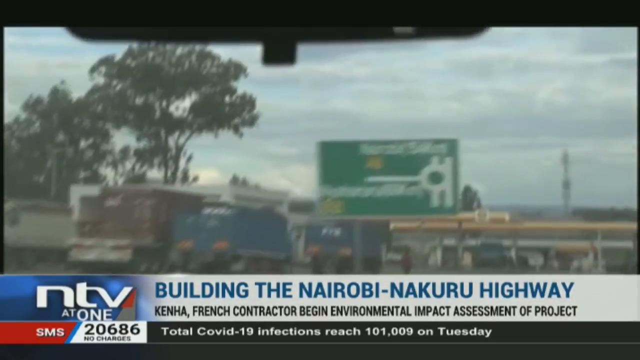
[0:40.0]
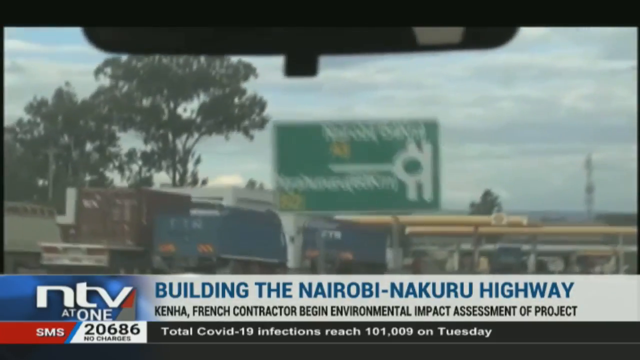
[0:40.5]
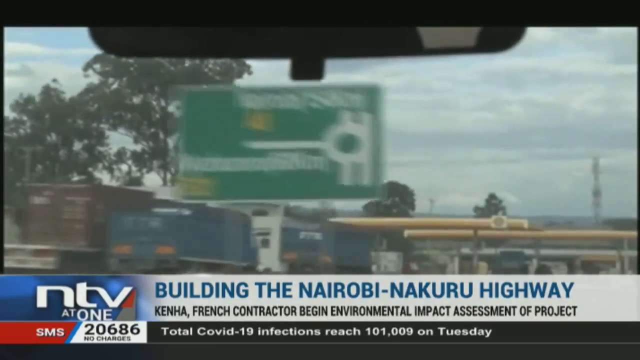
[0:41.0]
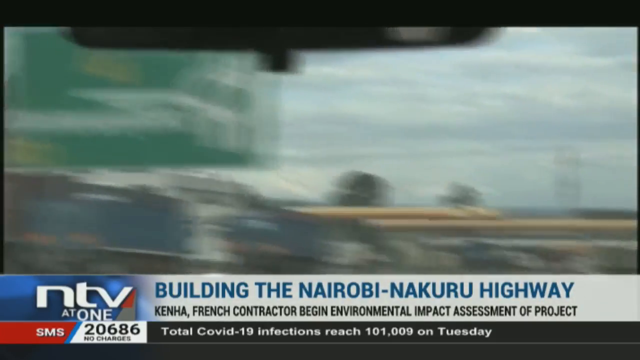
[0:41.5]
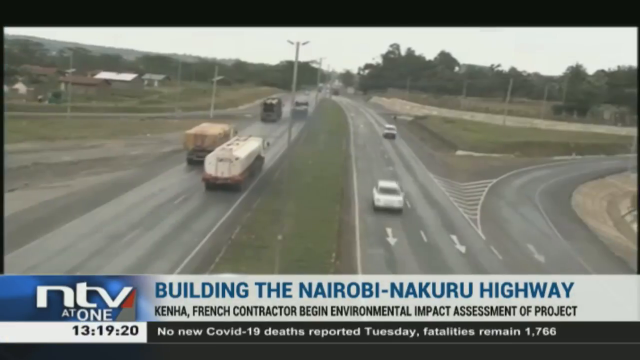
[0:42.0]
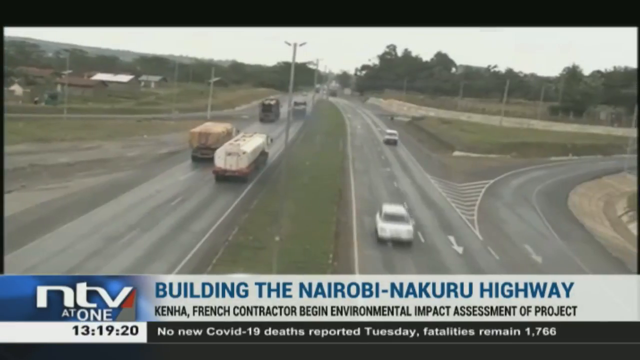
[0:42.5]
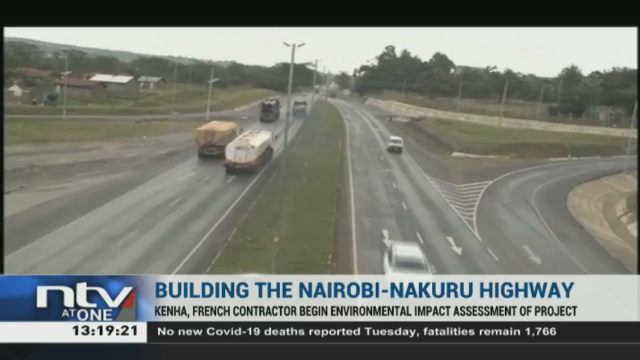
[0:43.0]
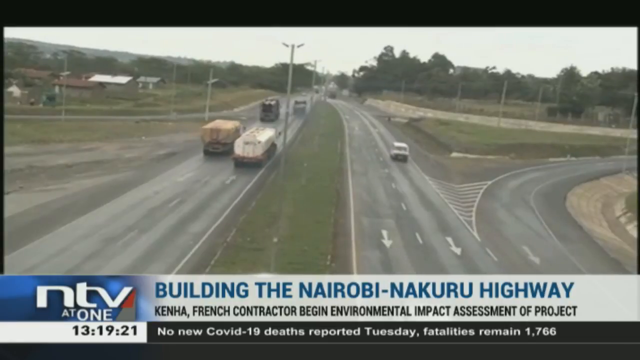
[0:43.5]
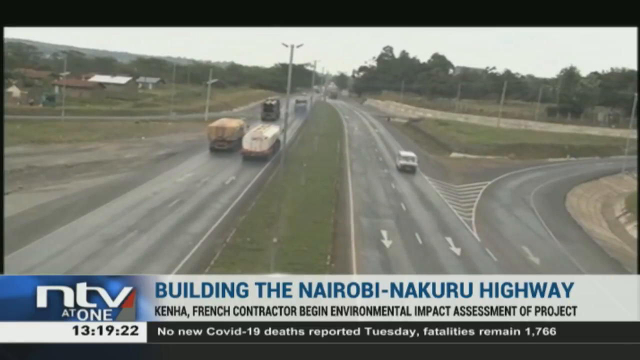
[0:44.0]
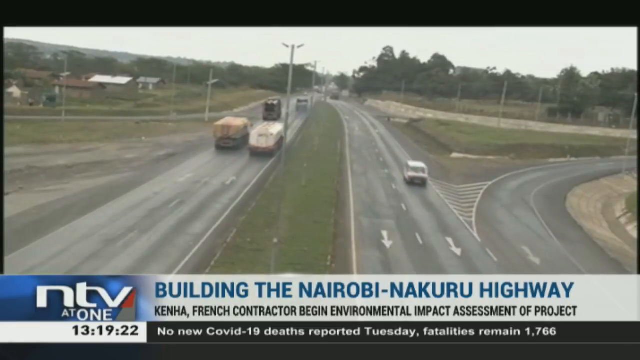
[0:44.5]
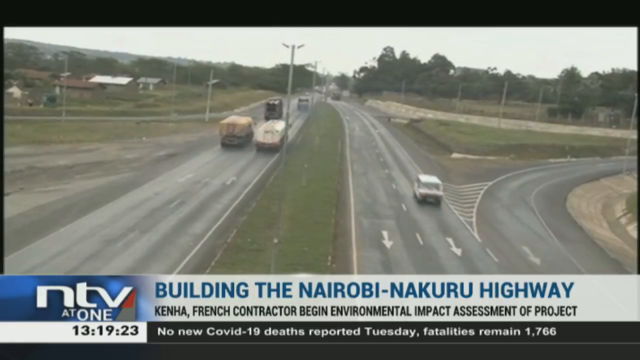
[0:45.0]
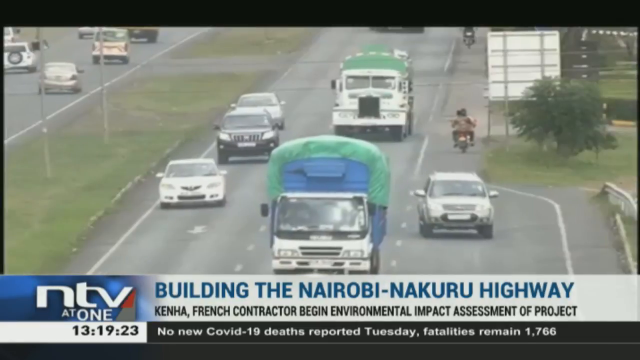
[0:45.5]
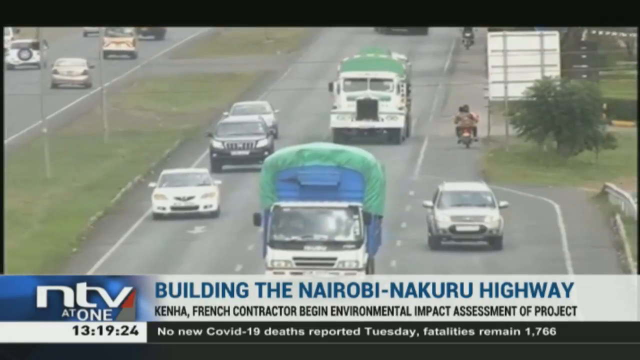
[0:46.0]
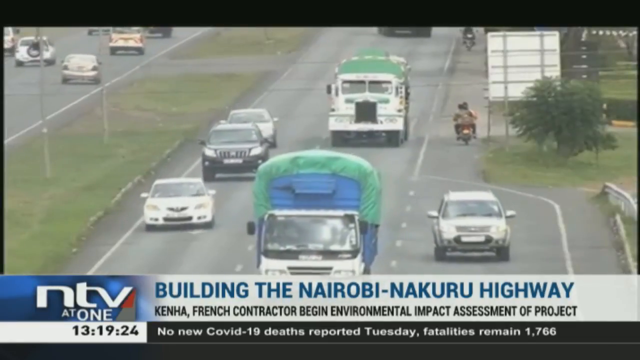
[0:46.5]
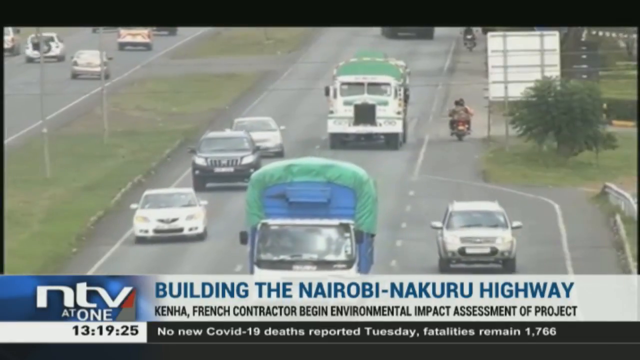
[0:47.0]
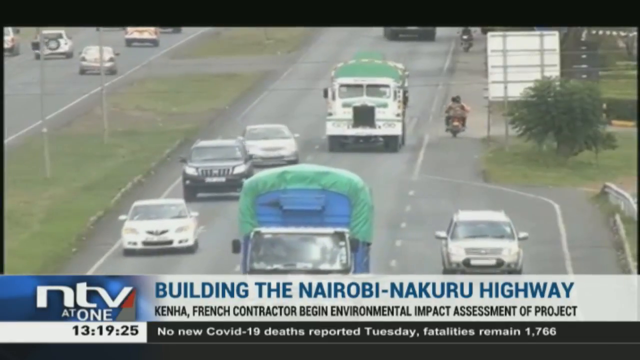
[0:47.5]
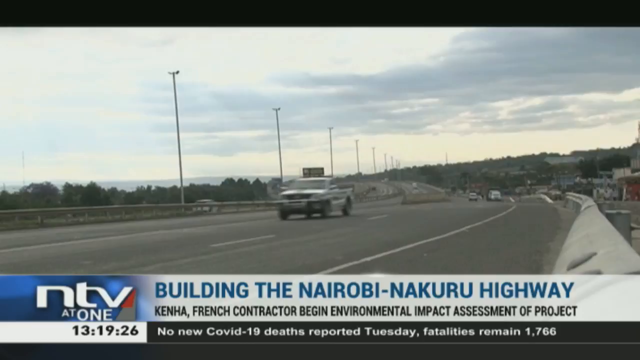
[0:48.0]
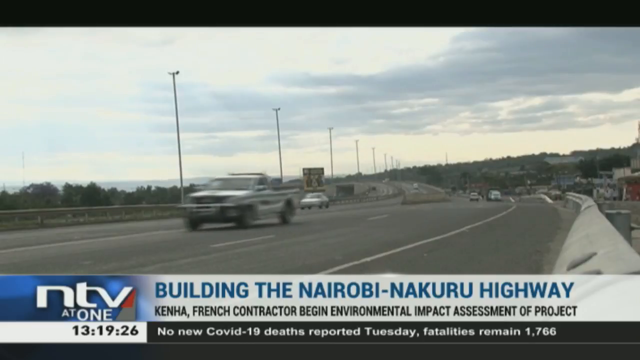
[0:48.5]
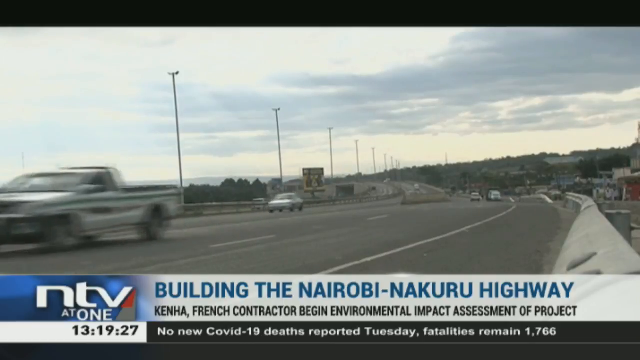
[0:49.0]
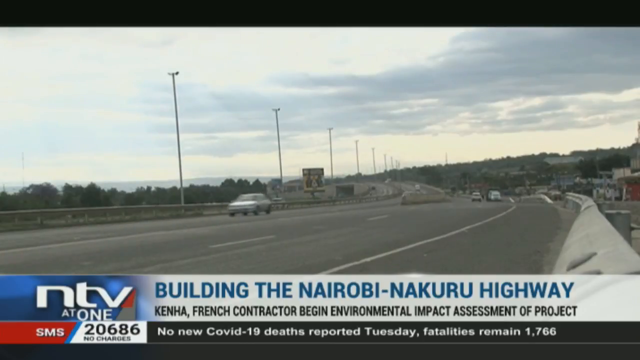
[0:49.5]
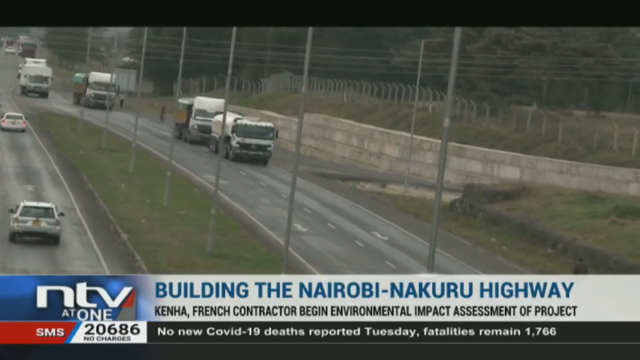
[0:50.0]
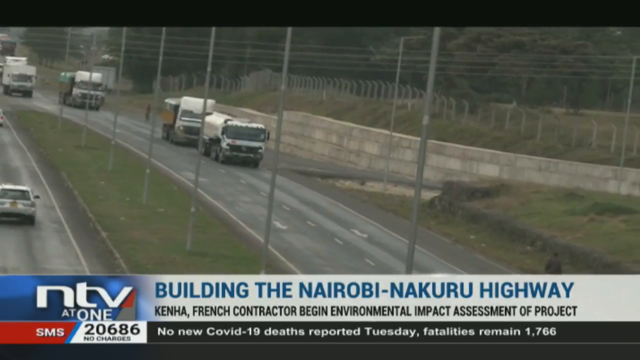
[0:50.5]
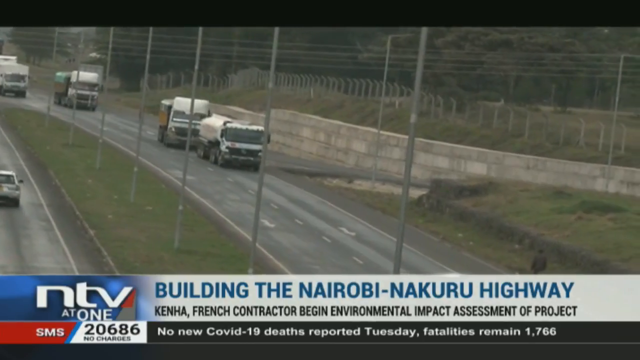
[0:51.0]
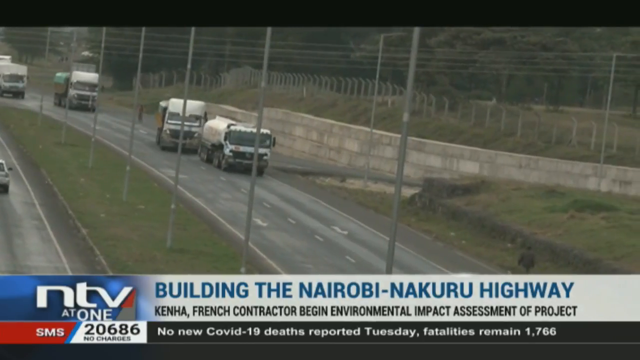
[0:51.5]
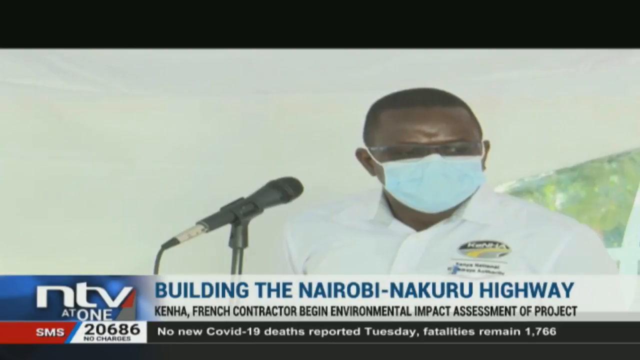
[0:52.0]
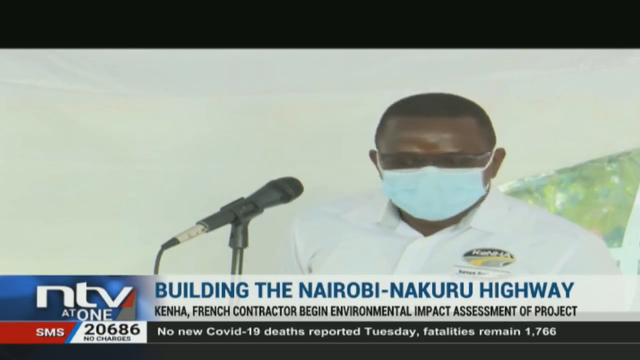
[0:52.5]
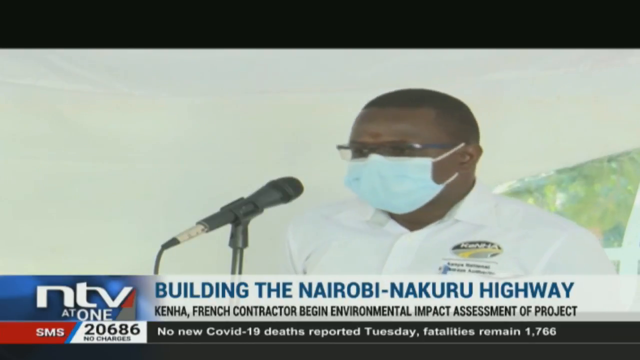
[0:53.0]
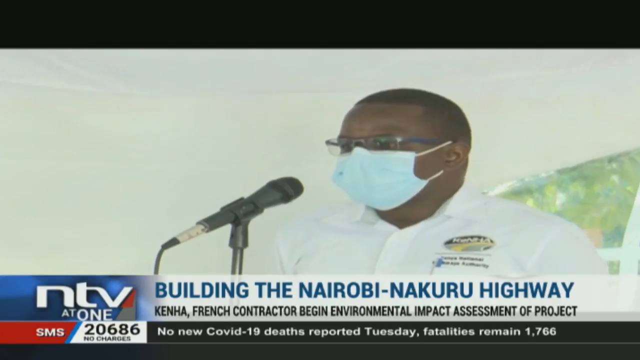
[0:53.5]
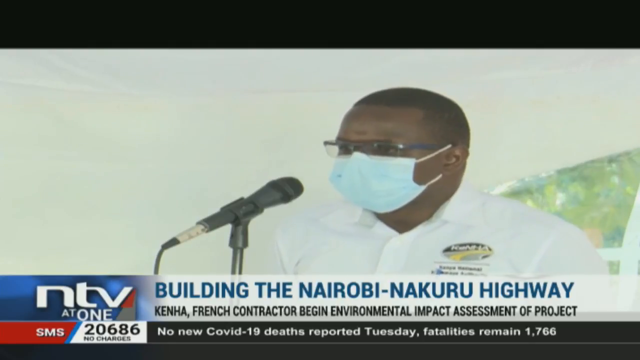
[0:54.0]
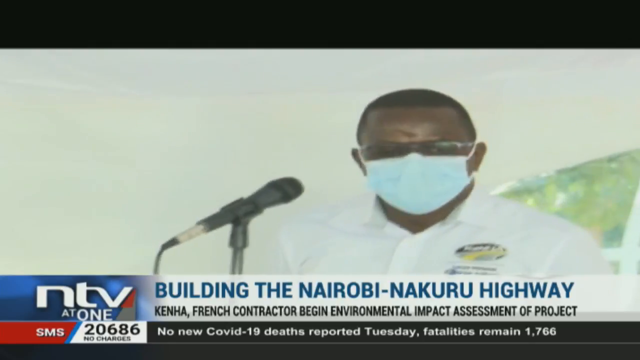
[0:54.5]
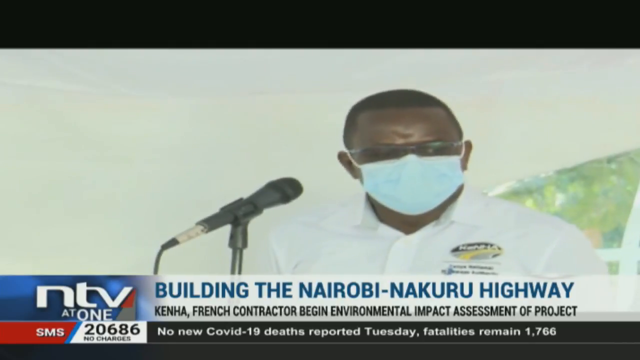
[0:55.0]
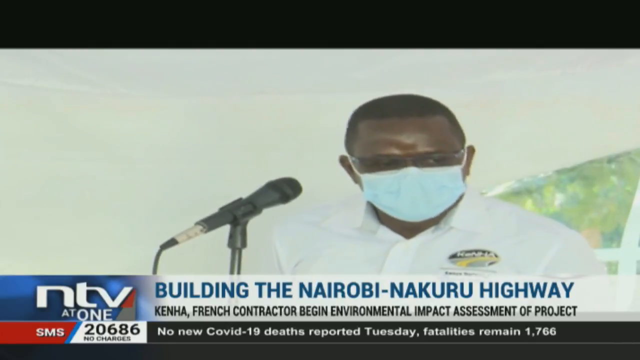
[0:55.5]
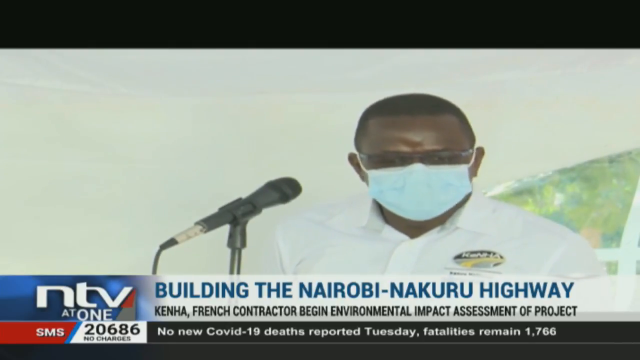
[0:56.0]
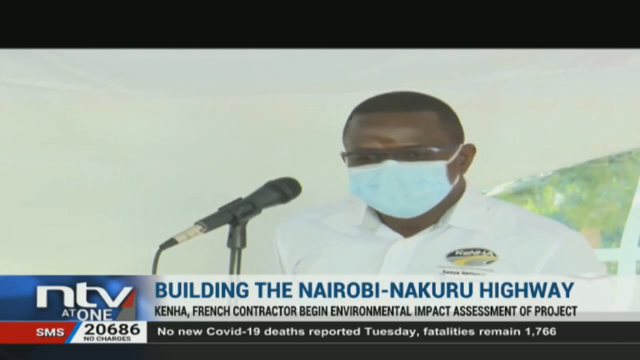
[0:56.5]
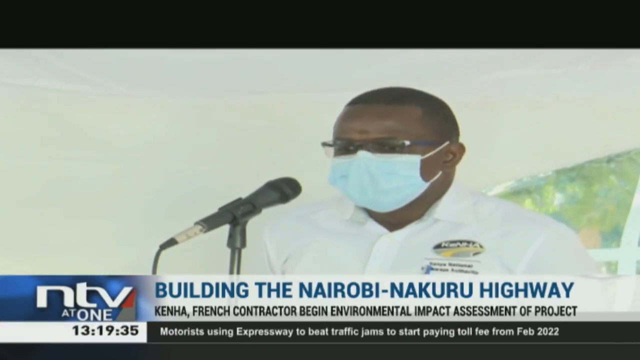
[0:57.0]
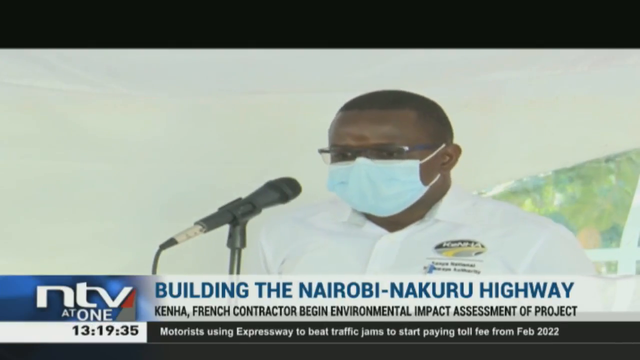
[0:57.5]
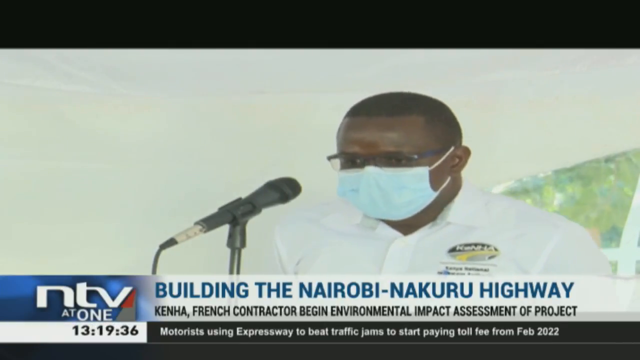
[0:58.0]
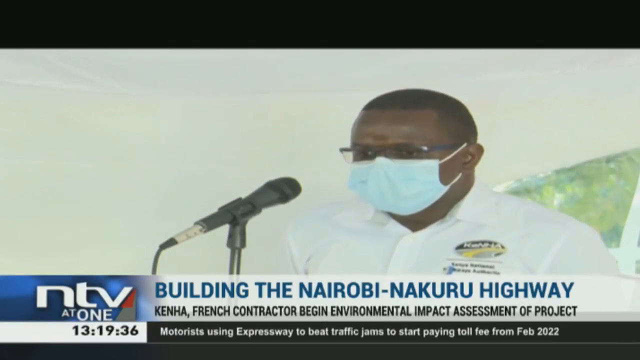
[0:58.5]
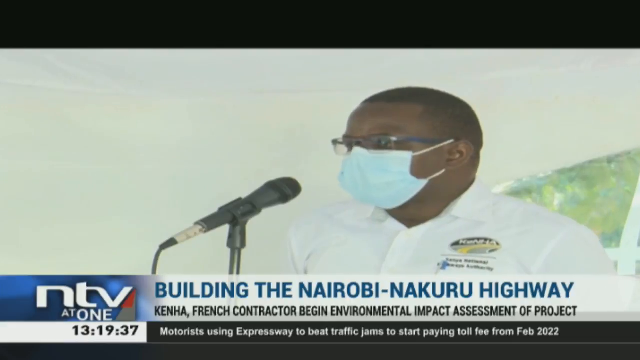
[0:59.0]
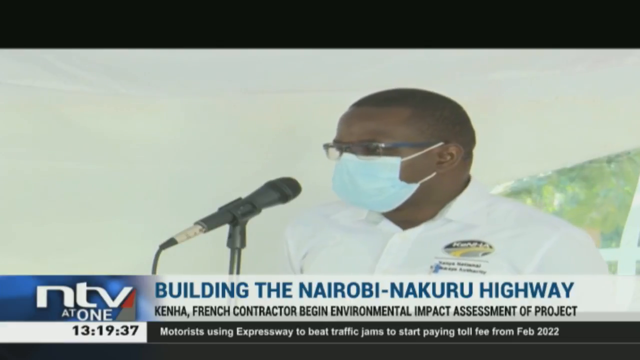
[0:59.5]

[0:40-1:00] Traffic keeps moving along the highway through a non-developed area, some of which looks rural, possibly farmland, especially to the left and in the distance on the left. More highway scenes follow. Then a man appears in a light blue sort of mask. He has very short hair, wears glasses and a white shirt, and speaks into what seems to be a microphone in front of him. A time below and to the left reads 13:19. The NTV, "NTV at one" logo remains at the bottom left, identifying the station. The traffic still moves on the left-hand side of the road.